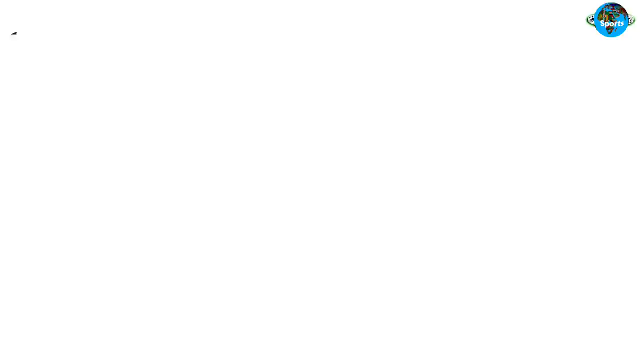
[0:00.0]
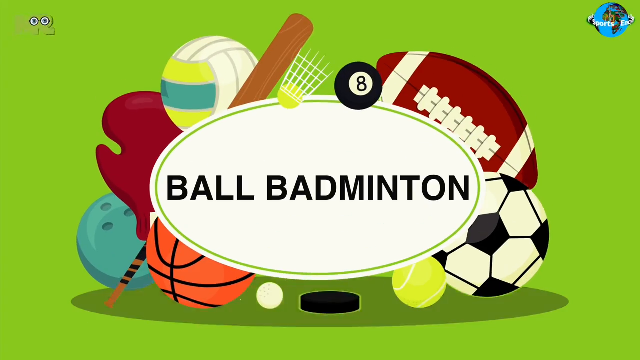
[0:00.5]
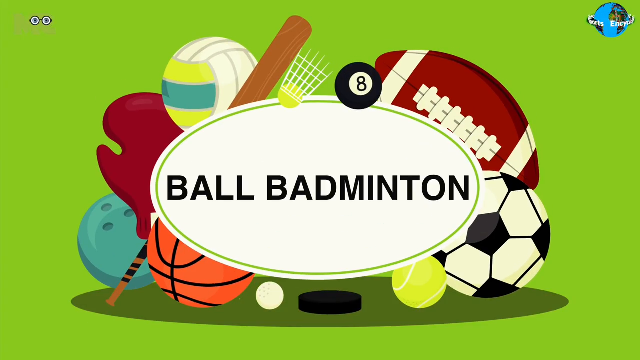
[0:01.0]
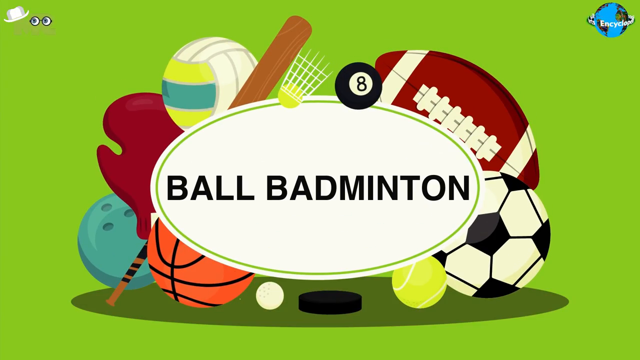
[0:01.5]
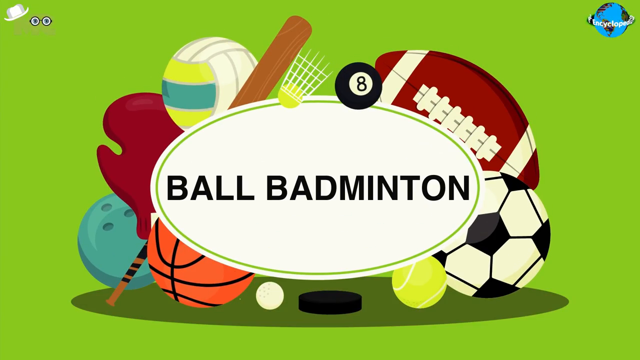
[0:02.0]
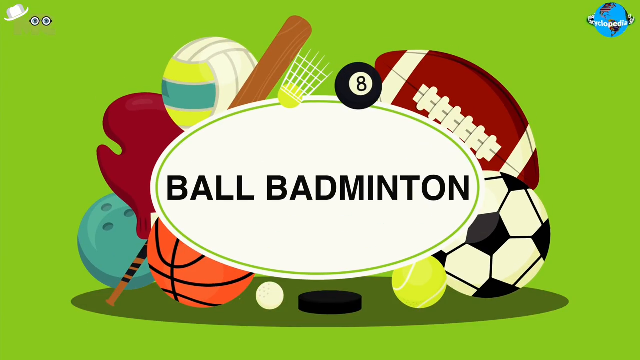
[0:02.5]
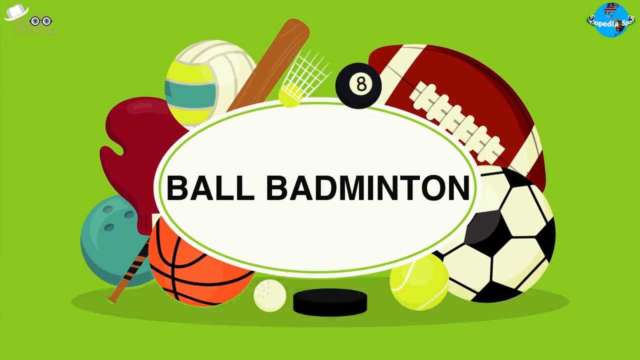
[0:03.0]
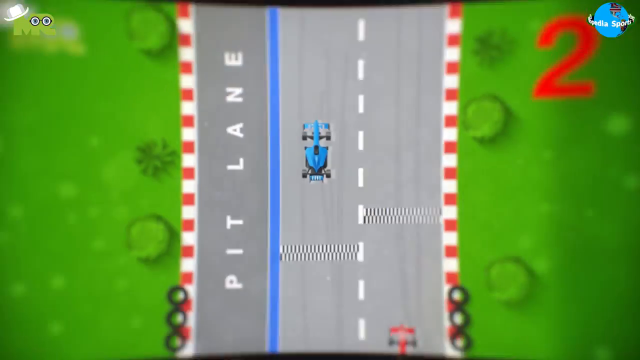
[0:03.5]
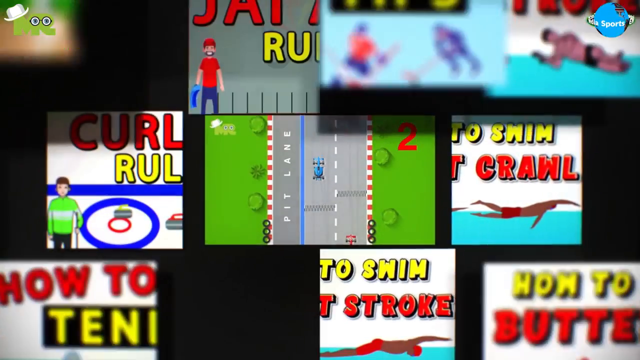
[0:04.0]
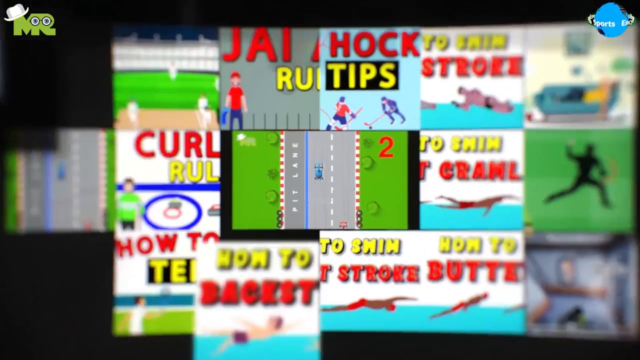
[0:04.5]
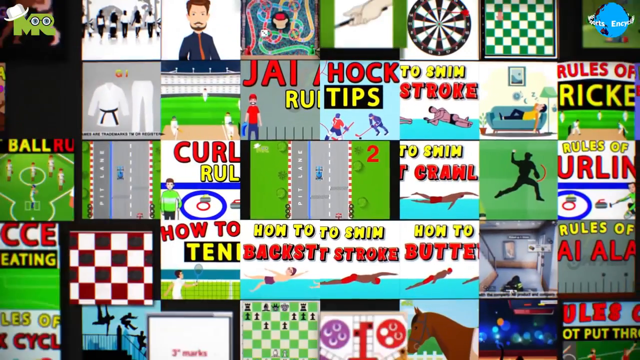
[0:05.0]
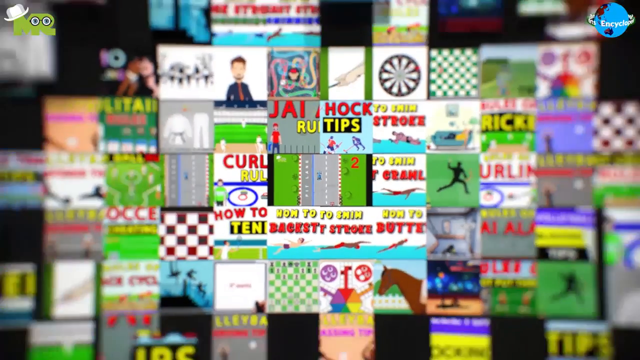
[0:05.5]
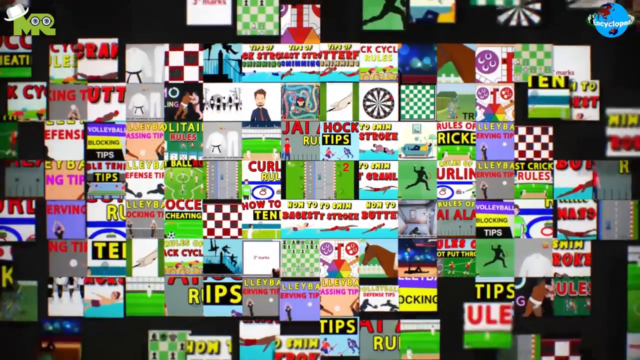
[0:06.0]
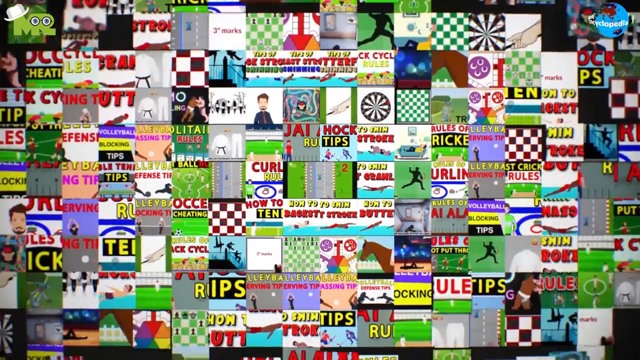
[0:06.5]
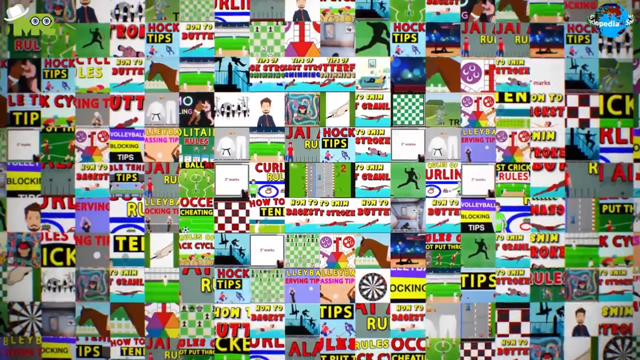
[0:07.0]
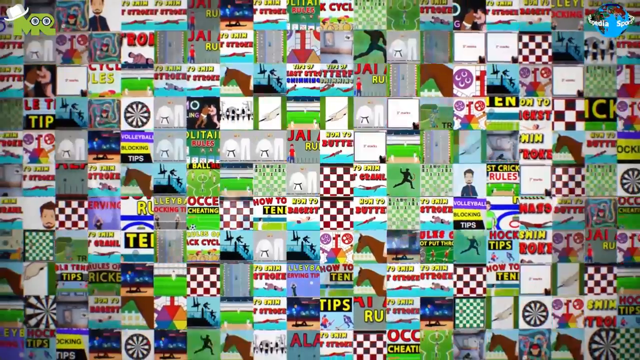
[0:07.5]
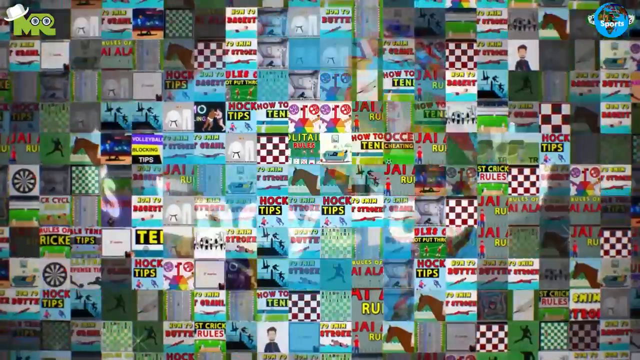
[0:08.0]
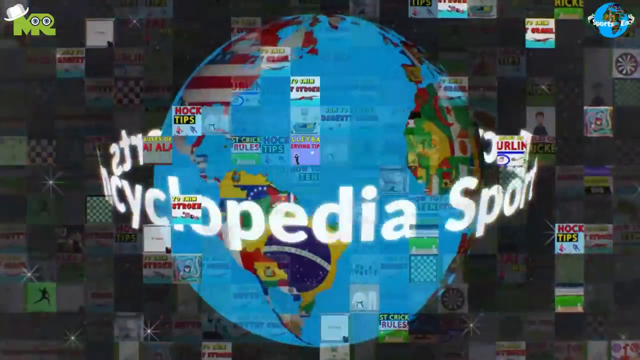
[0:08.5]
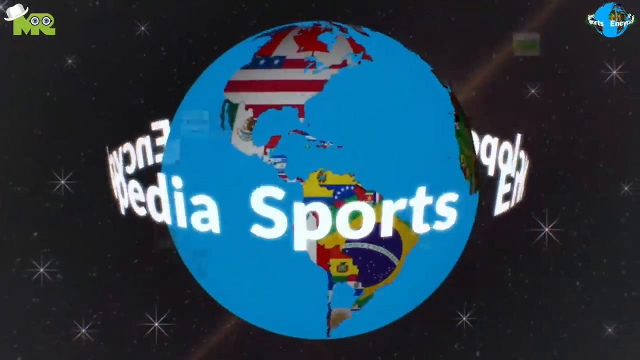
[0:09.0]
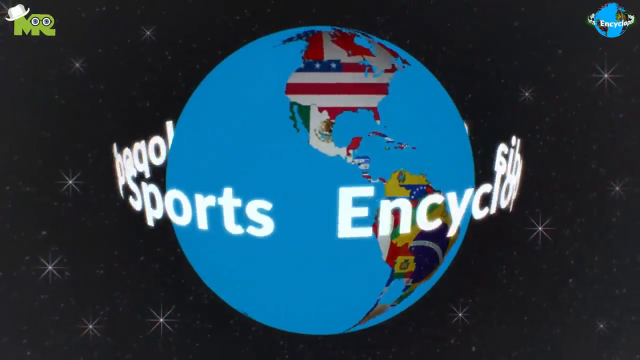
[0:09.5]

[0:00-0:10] What looks to be an animation opens with the text "ball badminton" in black, surrounded by a white oval background with a variety of sports equipment, such as a football and a soccer ball. Next comes a collage of retro-game-looking visuals with a checkerboard pattern made of many squares, almost like a random collage of different sports. After that, a giant globe appears with text going around it that mentions sports and an encyclopedia.